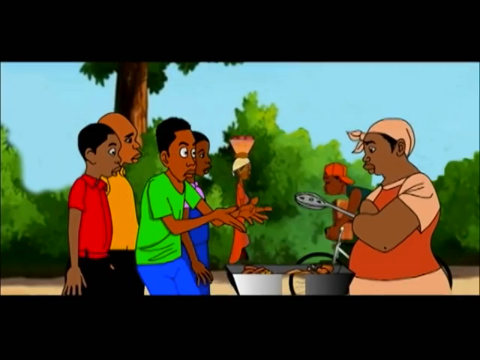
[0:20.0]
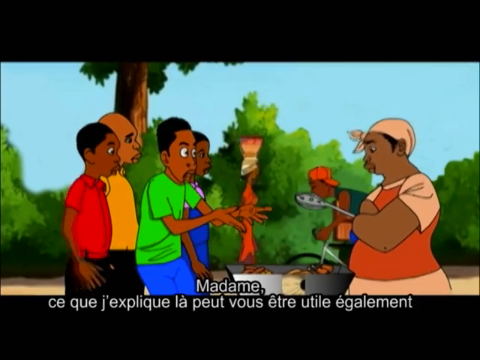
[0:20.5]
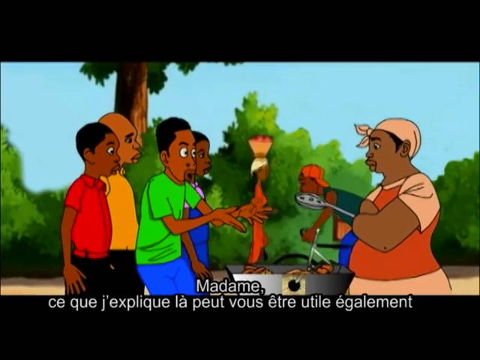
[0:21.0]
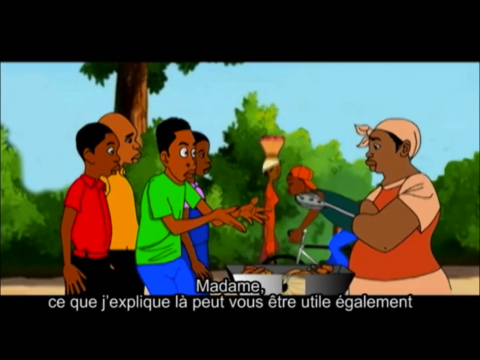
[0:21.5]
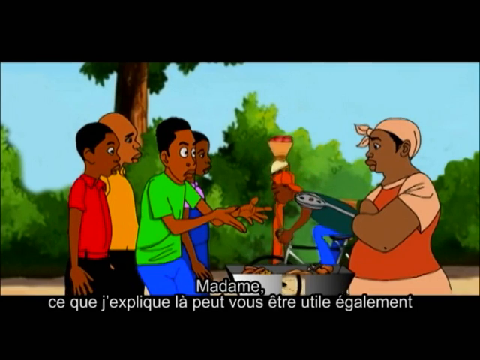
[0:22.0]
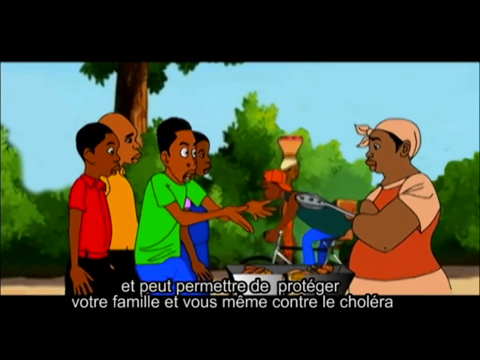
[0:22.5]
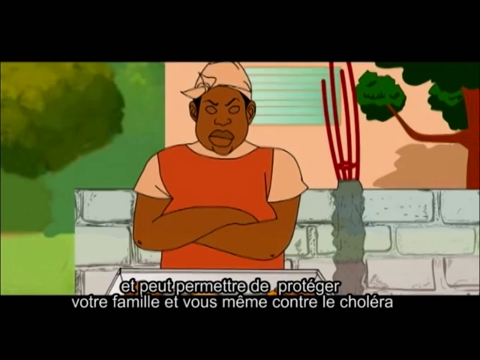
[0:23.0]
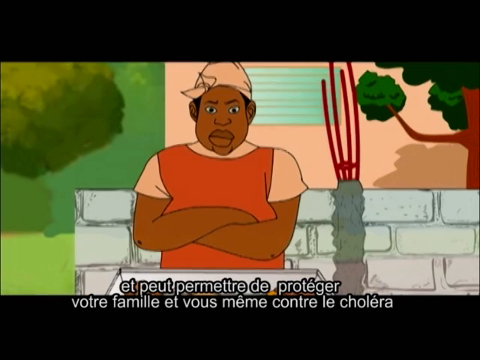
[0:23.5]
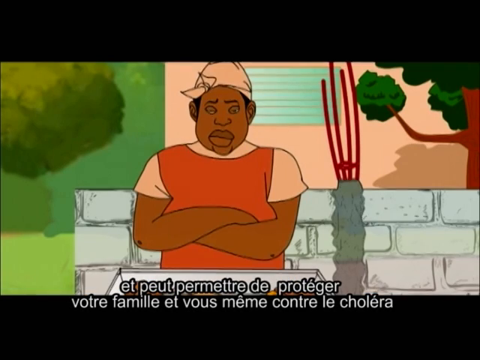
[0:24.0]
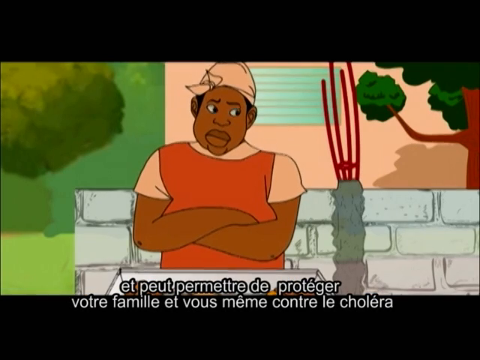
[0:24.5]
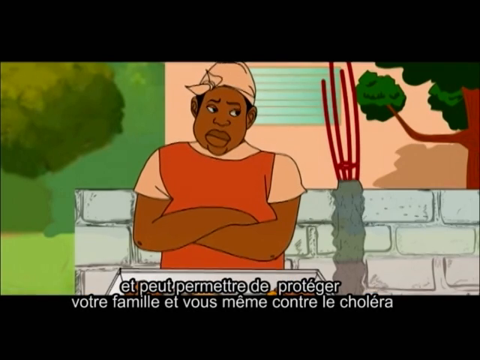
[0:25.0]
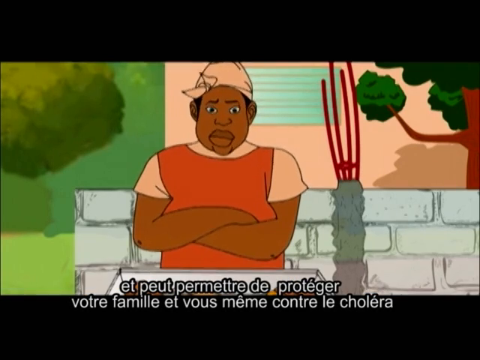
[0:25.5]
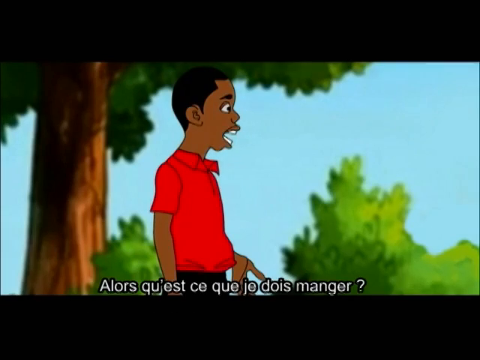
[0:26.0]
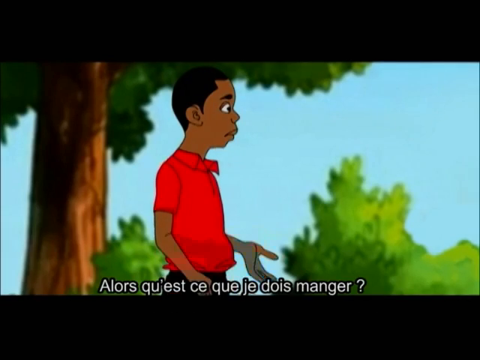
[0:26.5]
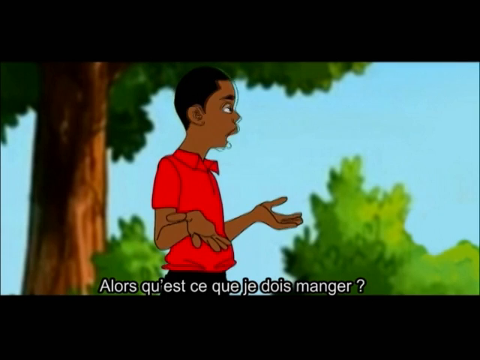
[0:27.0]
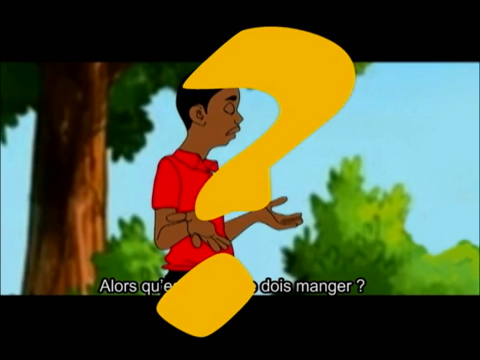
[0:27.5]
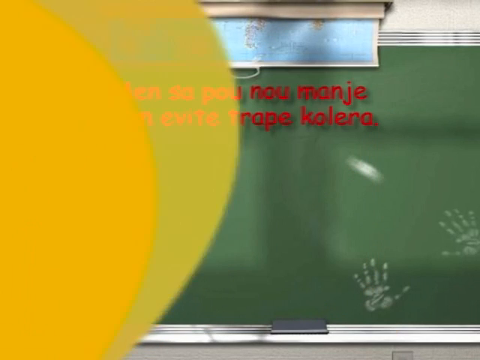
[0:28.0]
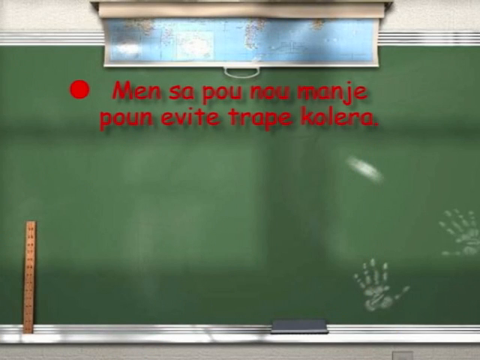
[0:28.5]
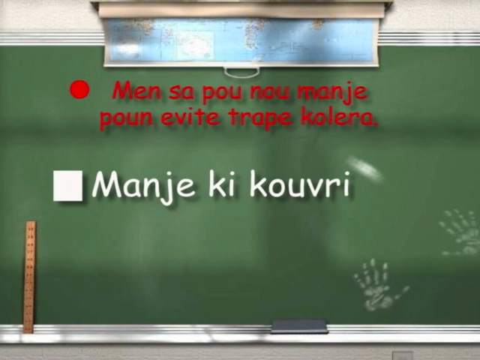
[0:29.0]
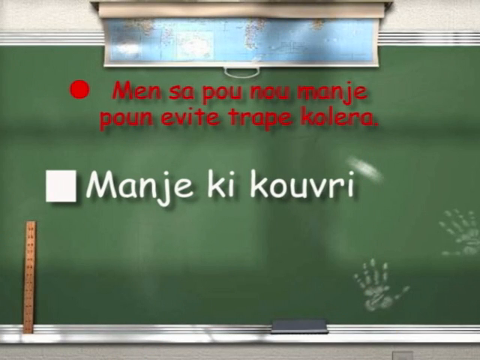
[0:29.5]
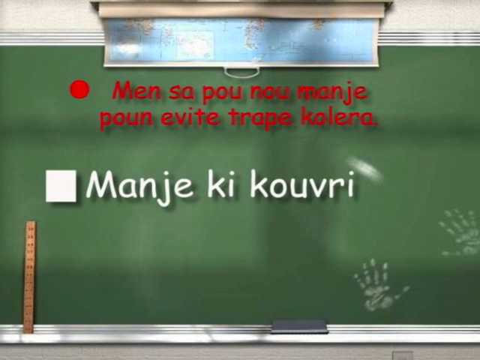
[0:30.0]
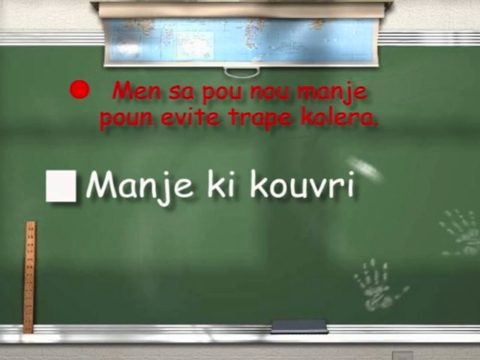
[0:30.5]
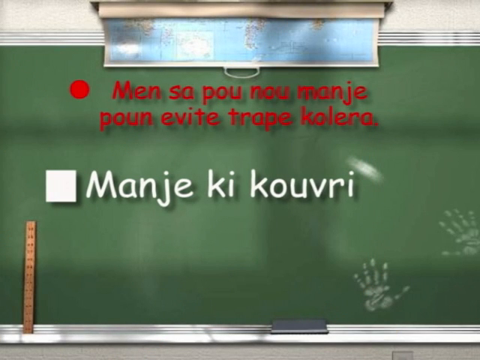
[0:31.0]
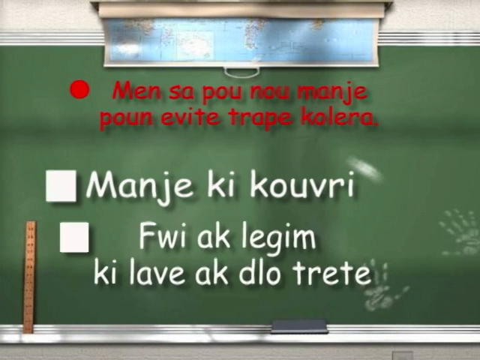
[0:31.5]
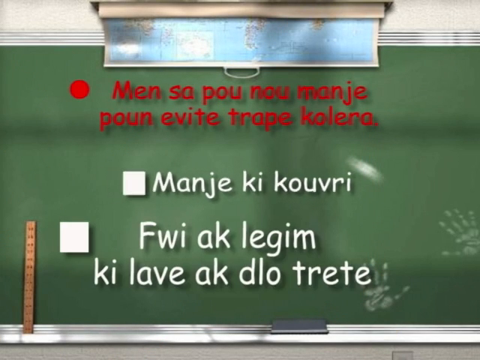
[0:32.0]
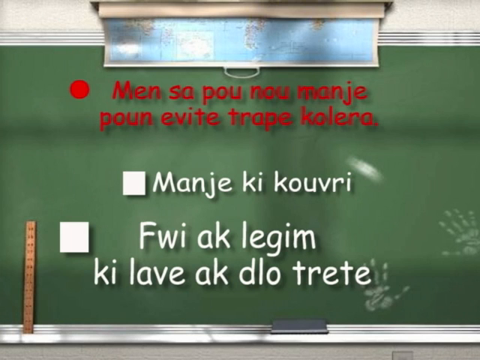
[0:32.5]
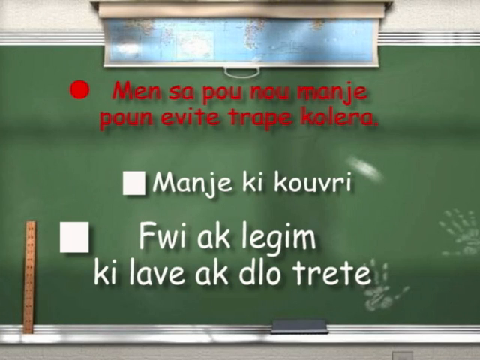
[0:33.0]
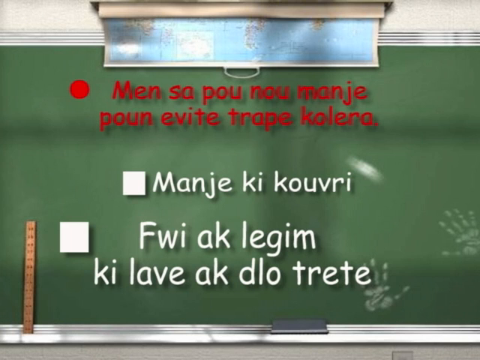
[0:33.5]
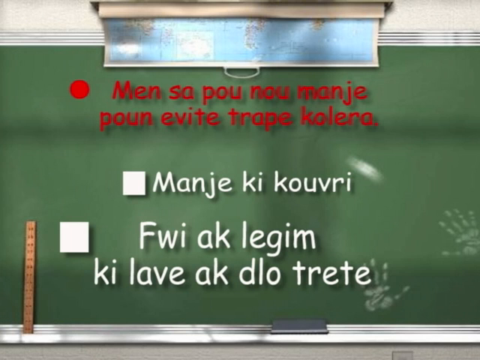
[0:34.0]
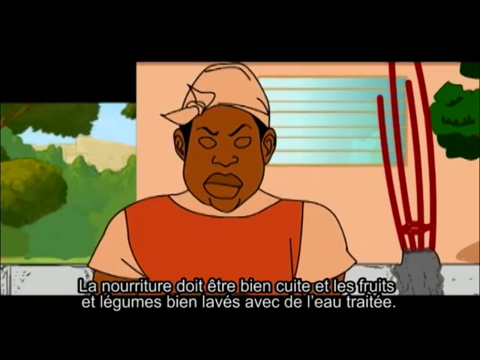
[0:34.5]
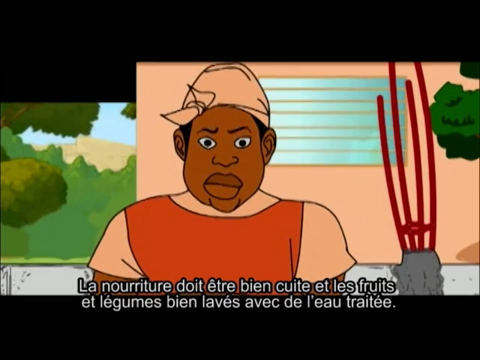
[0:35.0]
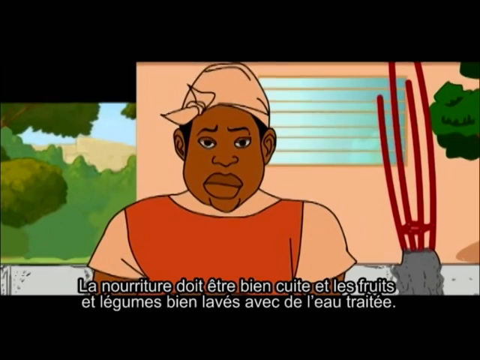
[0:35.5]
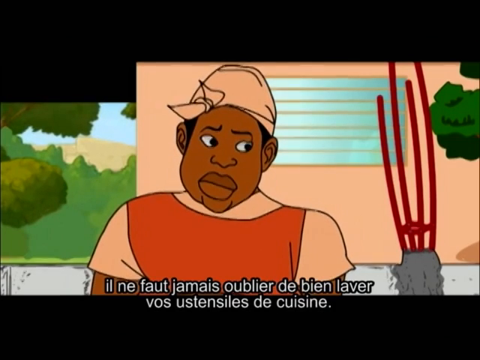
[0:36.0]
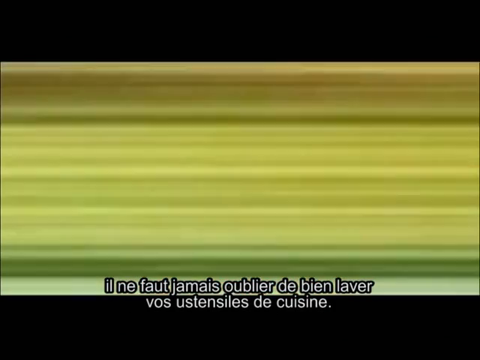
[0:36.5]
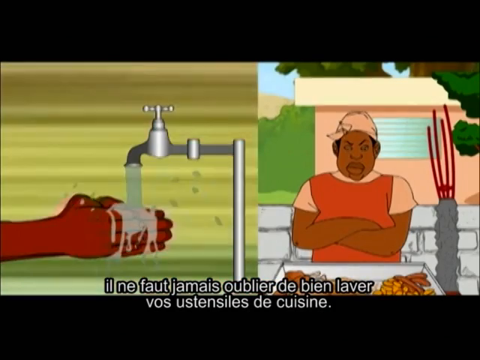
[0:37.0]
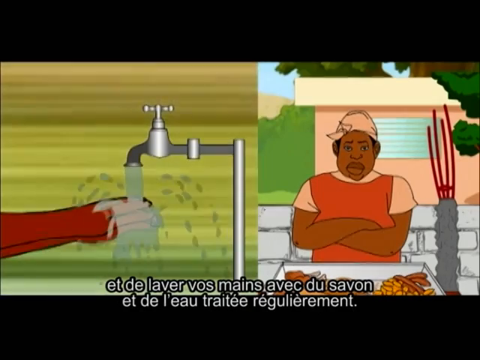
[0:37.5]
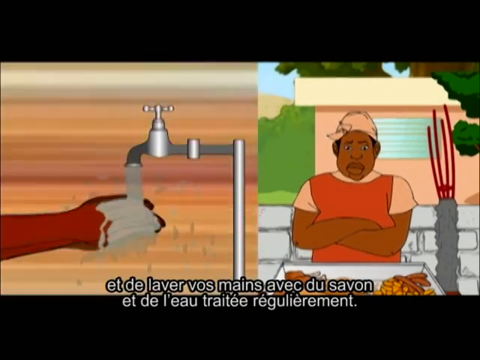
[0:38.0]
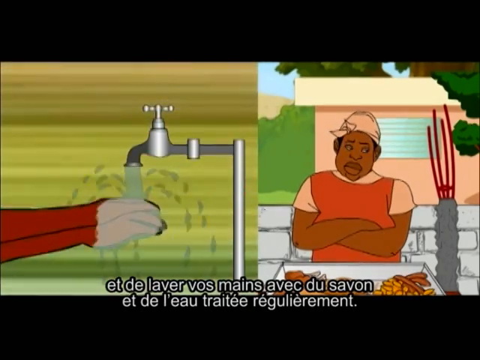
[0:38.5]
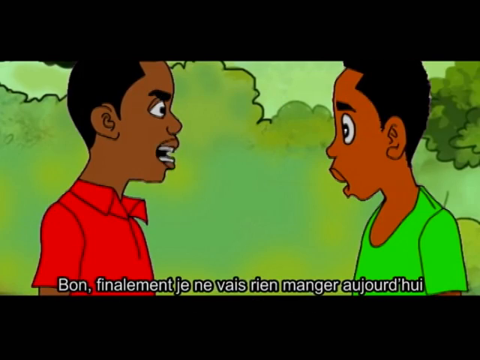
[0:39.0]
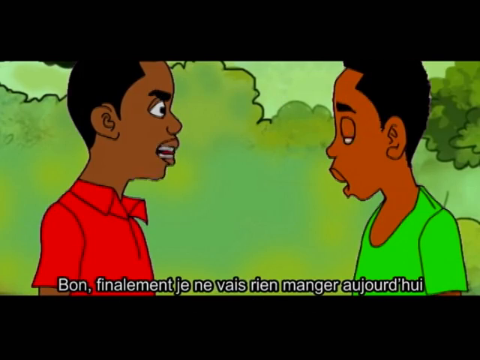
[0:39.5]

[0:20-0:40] In a cartoon, a group of people, all of African-American descent, are standing near a barbecue. There are four people on the left of the barbecue and one larger person on the right. Of the three men on the left, one wears a green shirt with blue shorts, one wears an orange collared shirt with black pants, and the other wears a red shirt with black pants. A woman wears a blue dress with a purple shirt underneath. The larger person on the right wears an orange and pink shirt with a pink bottom and a pink head wrap, and is holding a spoon or a ladle. The barbecue has some food items in it. In the background are green bushes, a person riding a bike wearing an orange cap backwards, and a woman in an orange dress walking with a vase on her head. A close-up shows the person behind the barbecue with arms crossed, looking side to side. The man in the red shirt then gestures and talks as a giant question mark appears on the screen. The scene switches to what looks like a green blackboard, with a map at the top that can be pulled down and a ruler sitting on the chalk rest. There are words in red at the top of the chalkboard; white words then appear below them, and more white words appear below those. The view returns to the person behind the barbecue, who is still looking side to side. That image shifts to the right side of the screen, and on the left side a water faucet appears against a green background, with a person's hands underneath the water, washing. The view then switches to the man in the green shirt and the man in the red shirt talking to each other angrily.